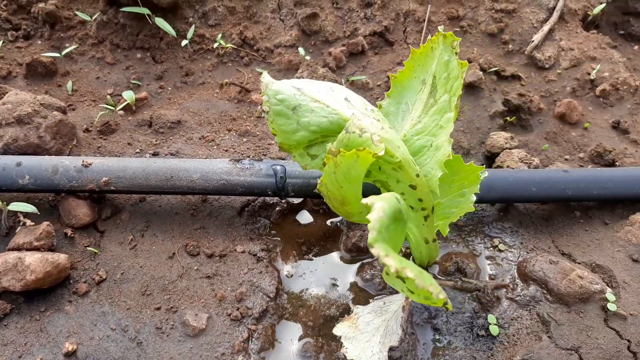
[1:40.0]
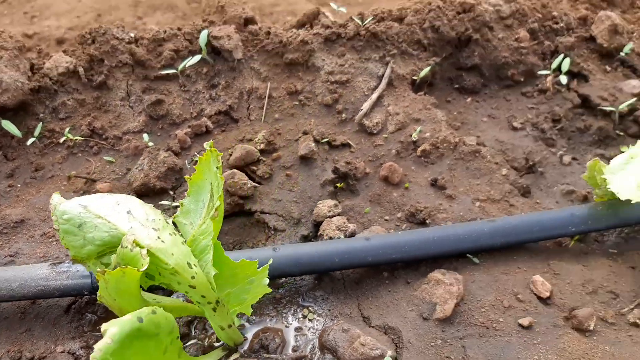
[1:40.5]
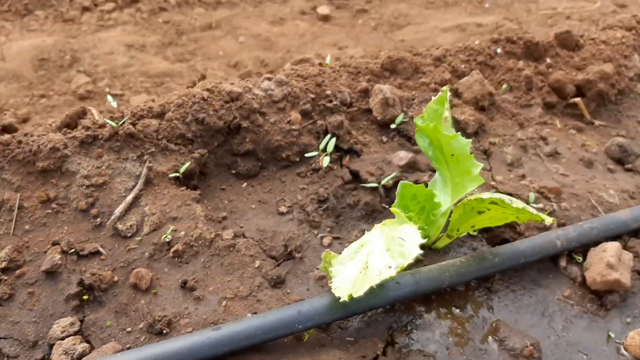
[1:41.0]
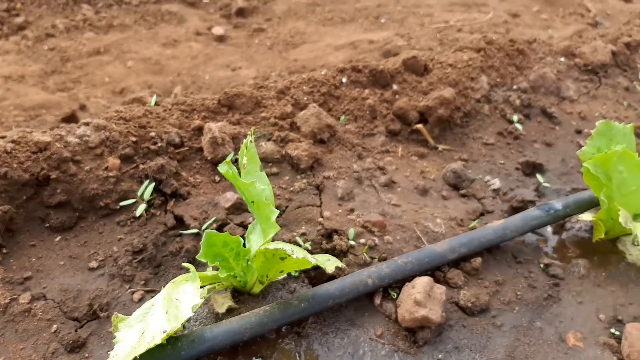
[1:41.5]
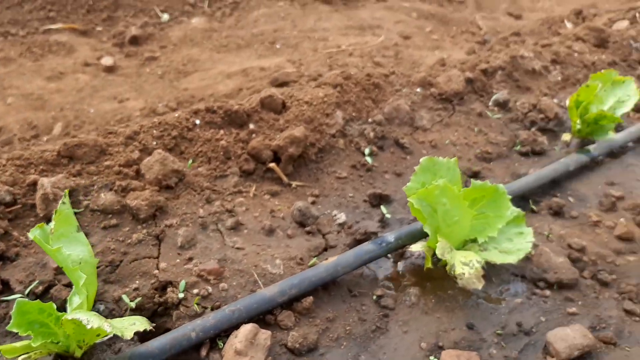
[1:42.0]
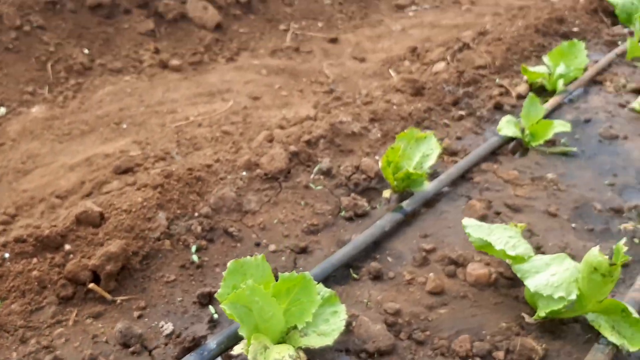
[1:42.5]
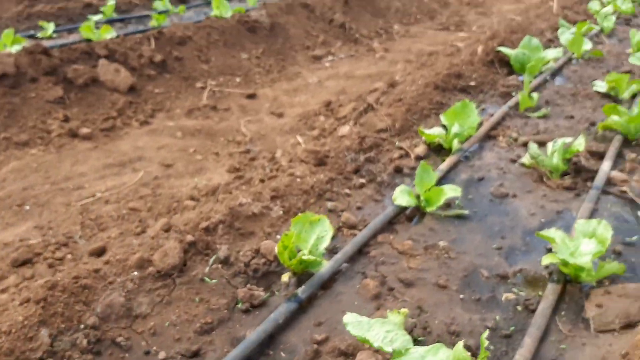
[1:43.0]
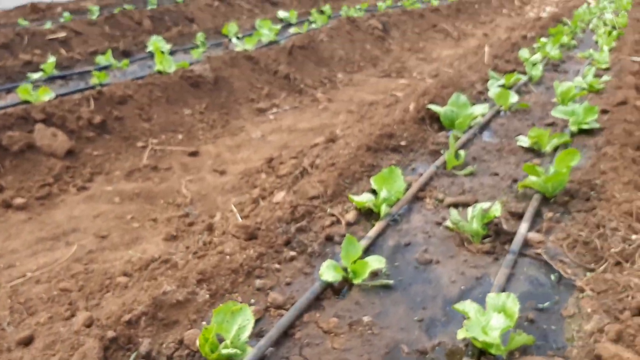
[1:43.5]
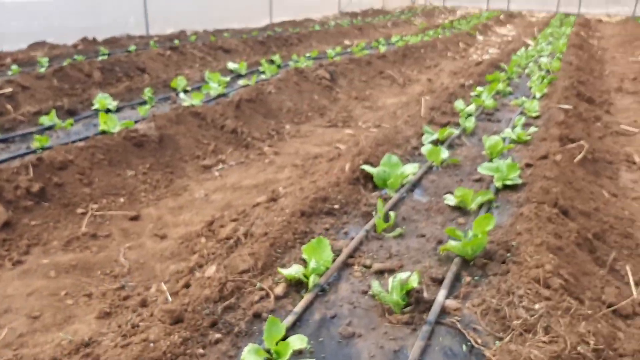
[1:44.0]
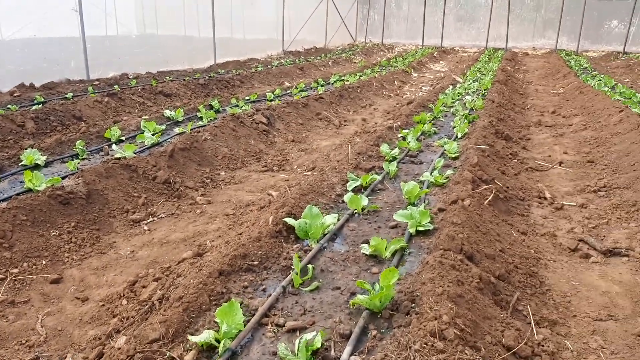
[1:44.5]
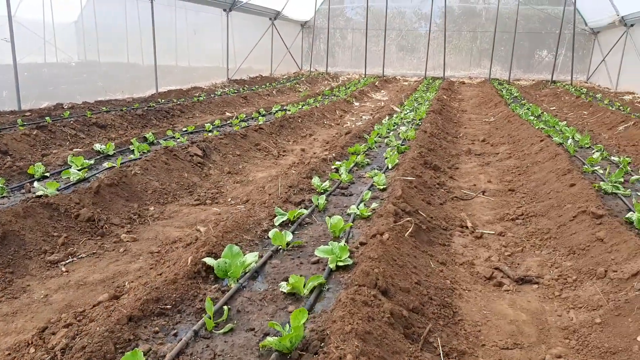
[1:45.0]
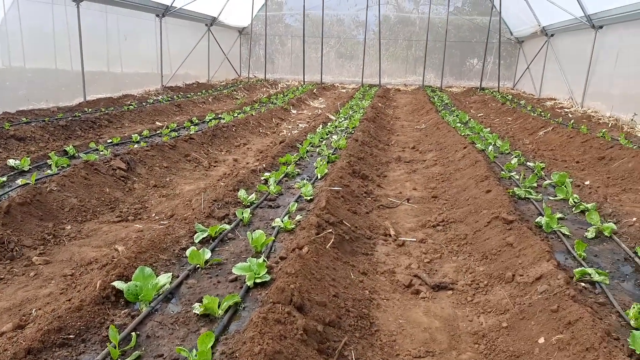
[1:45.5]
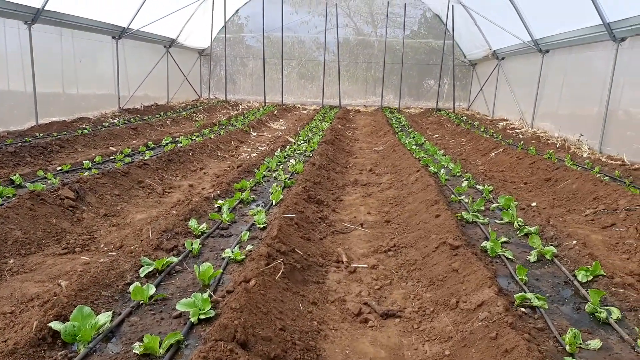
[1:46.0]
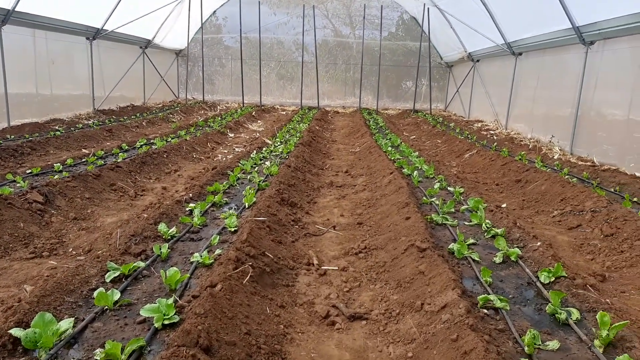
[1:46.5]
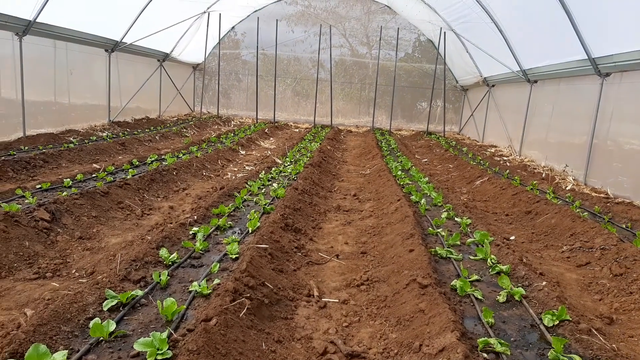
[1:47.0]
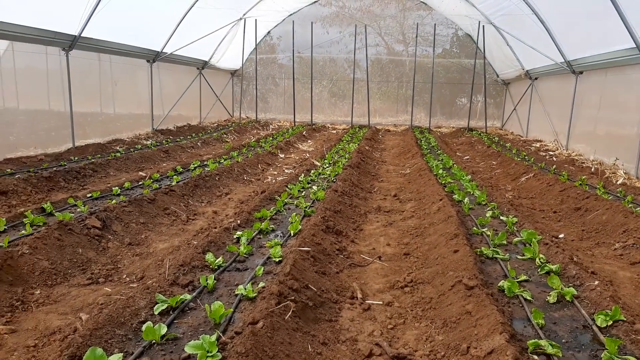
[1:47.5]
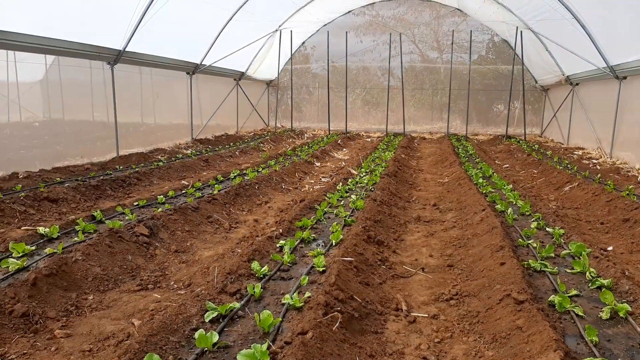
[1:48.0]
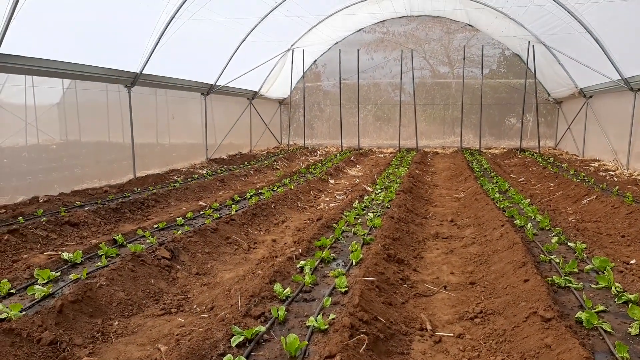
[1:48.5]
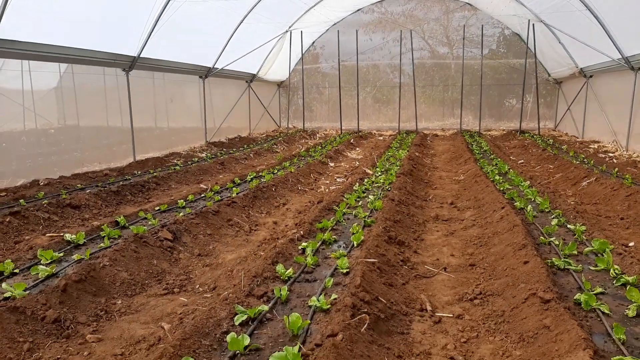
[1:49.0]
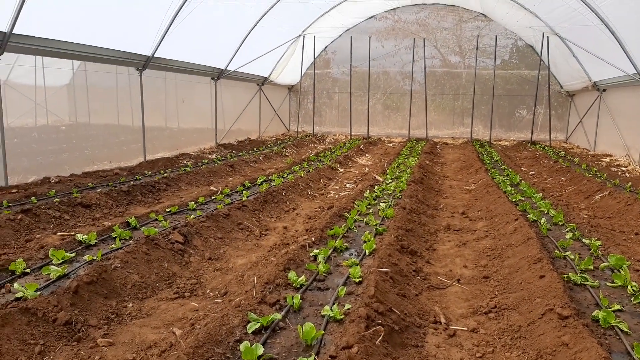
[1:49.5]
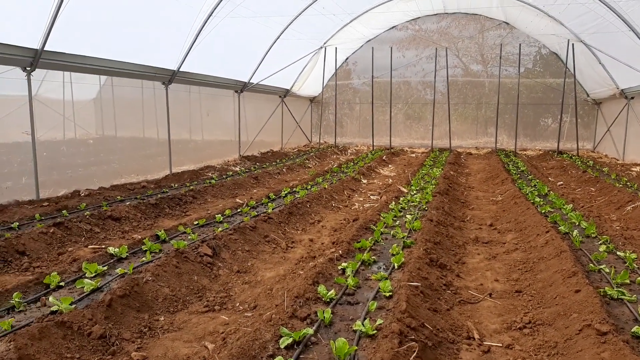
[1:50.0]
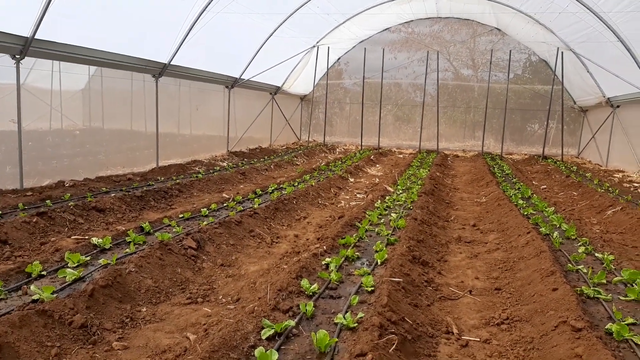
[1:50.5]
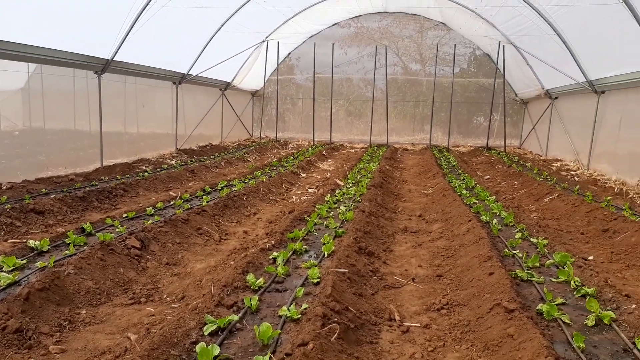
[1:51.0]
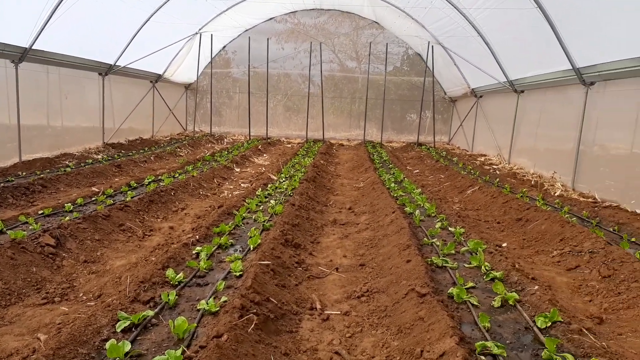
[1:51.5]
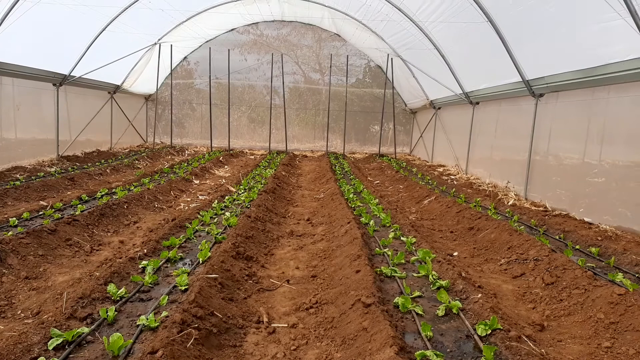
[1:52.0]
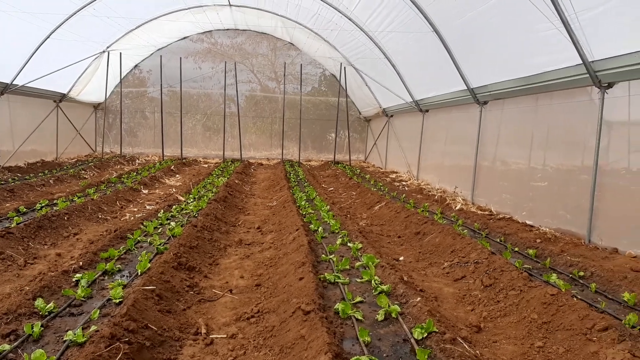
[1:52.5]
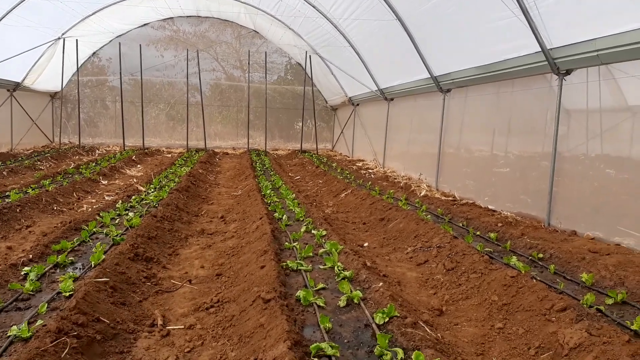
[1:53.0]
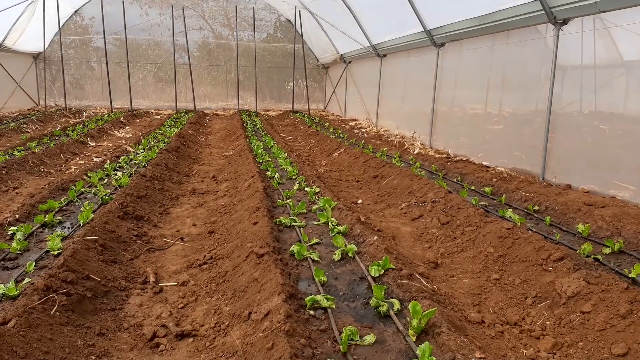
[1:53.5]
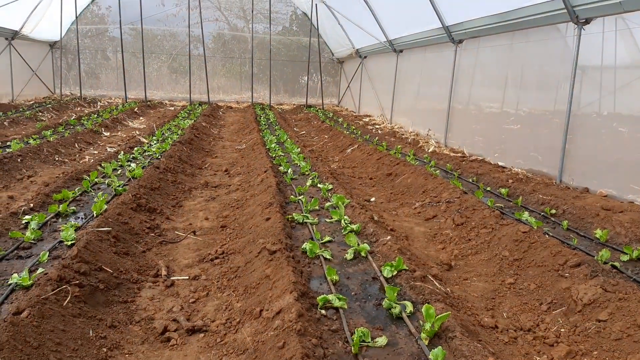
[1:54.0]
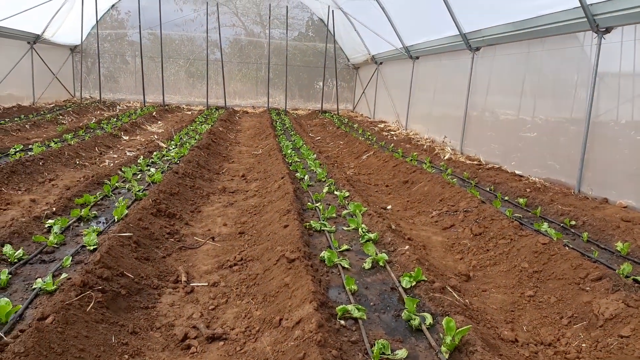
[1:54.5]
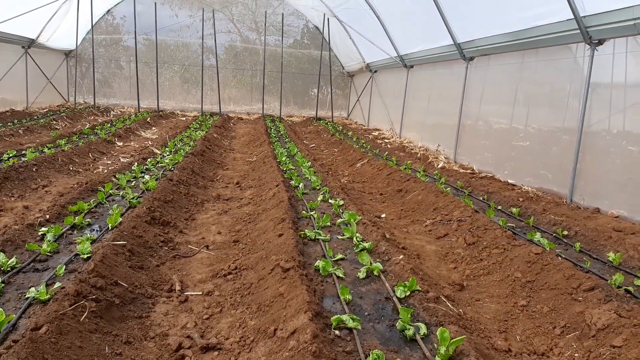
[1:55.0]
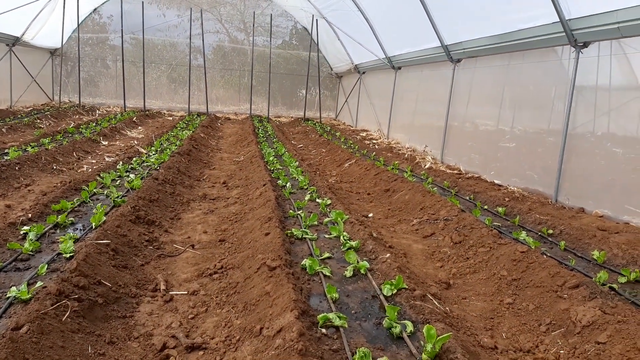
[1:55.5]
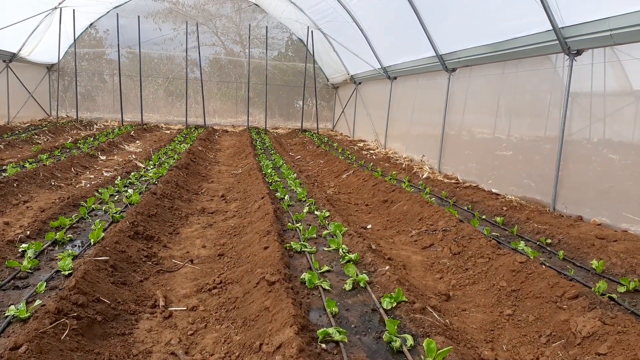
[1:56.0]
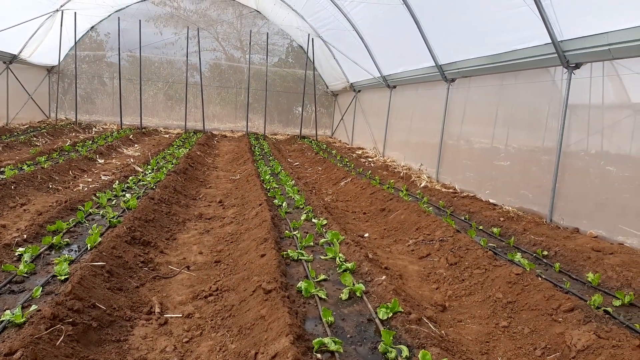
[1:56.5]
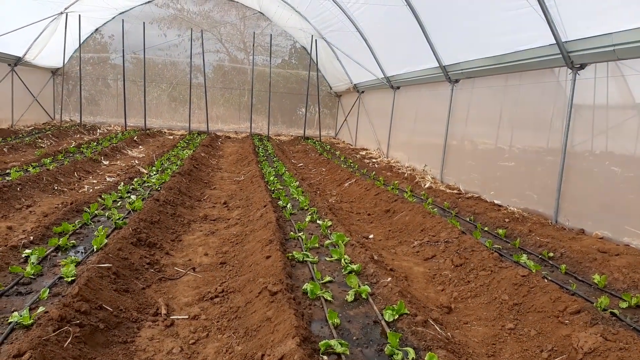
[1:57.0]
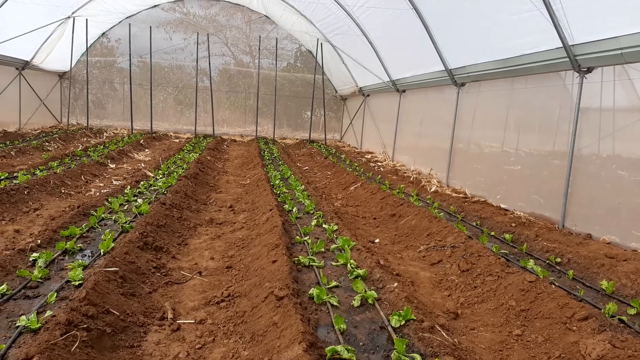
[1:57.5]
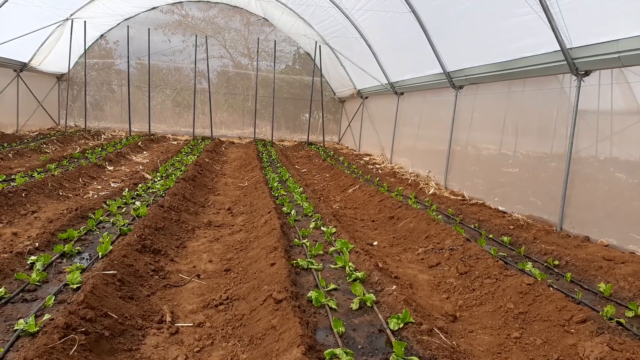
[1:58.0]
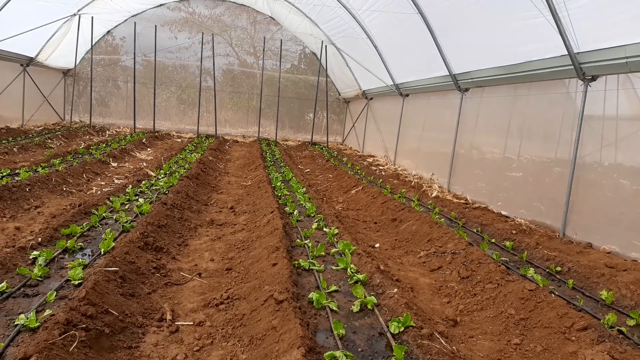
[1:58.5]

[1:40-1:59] Inside a nursery or greenhouse, the video starts with a close-up of a seedling sprouting from the ground, showing the water delivery system in place. The view then comes from the cameraman, who holds the camera while standing in the middle of the nursery. The rows run from one end of the nursery to the other, and he takes a few very small, slow steps down its length. All the plants are the same: four rows of what appear to be exactly the same plants, with no others shown, the same size, no bigger than four inches each, with the same leaves and uniform spacing. The water delivery system runs parallel from one end of the nursery to the other, with the plants planted all down the lengths and rows of dirt in between. It is daytime and somewhat sunny outside. The inside structure of the nursery is made of clear to transparent tarps and gray metal poles. The video ends with a close-up of a seedling next to one of the pipes of the water delivery system.